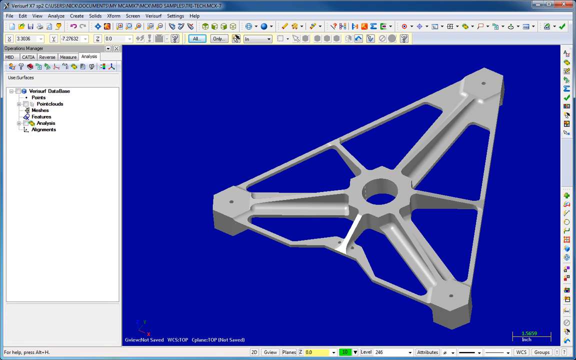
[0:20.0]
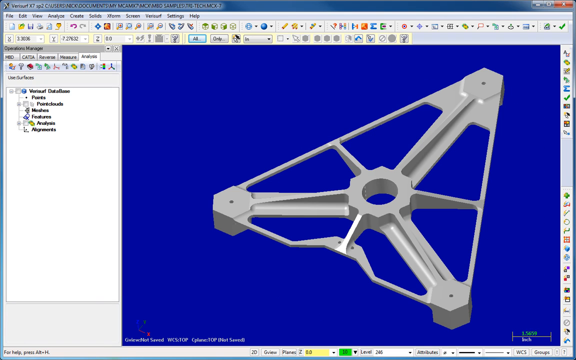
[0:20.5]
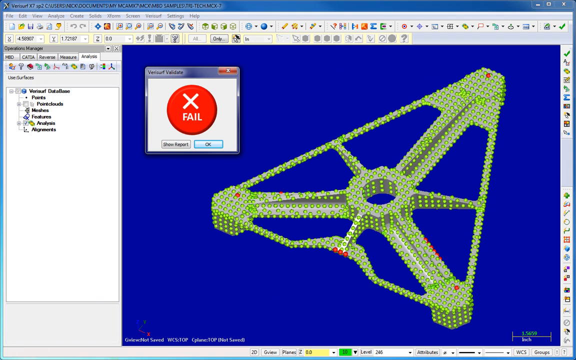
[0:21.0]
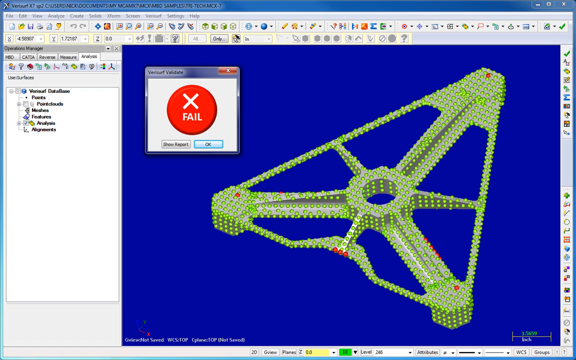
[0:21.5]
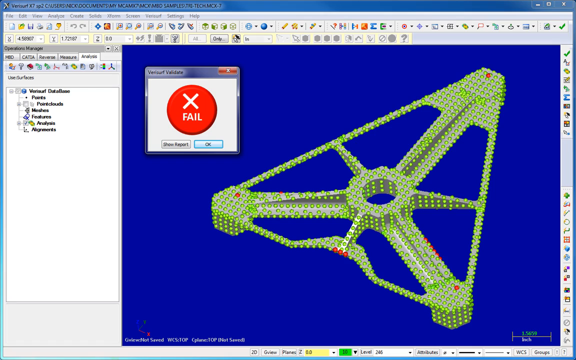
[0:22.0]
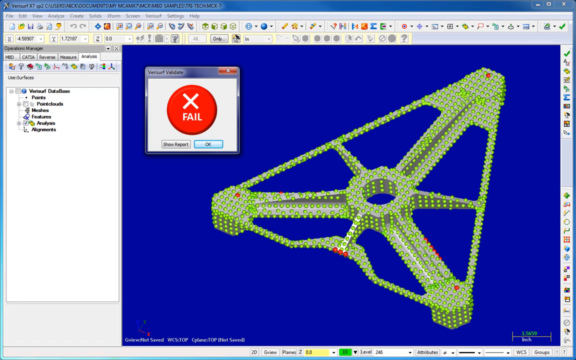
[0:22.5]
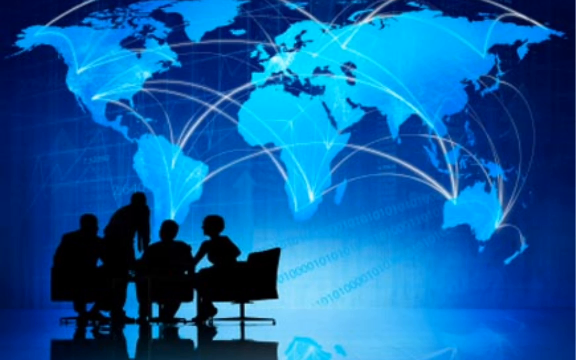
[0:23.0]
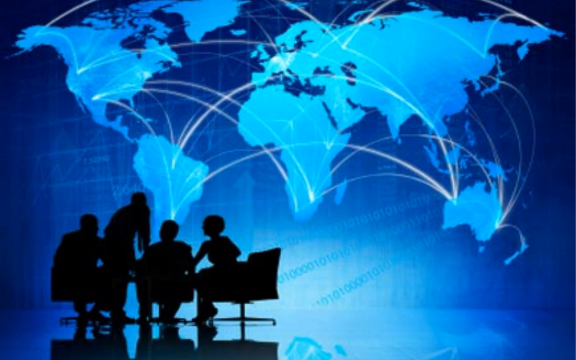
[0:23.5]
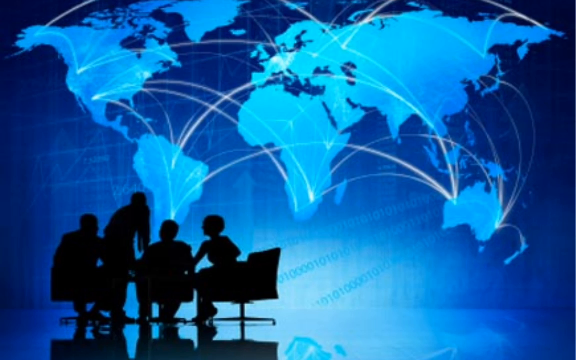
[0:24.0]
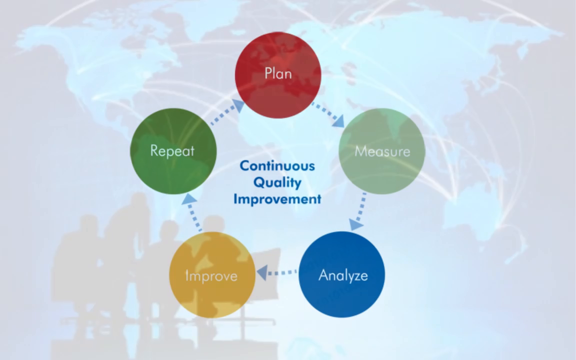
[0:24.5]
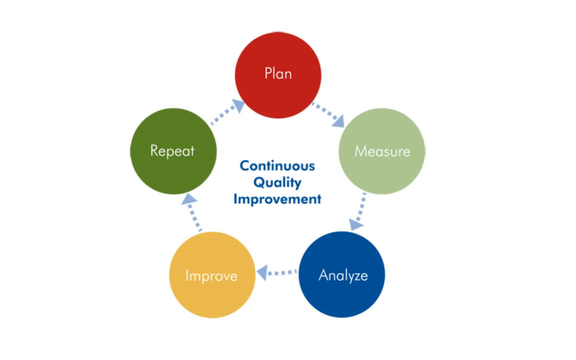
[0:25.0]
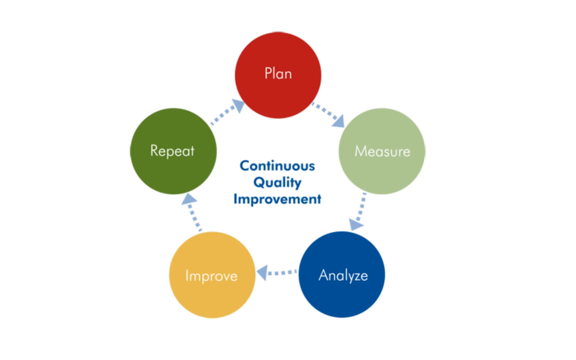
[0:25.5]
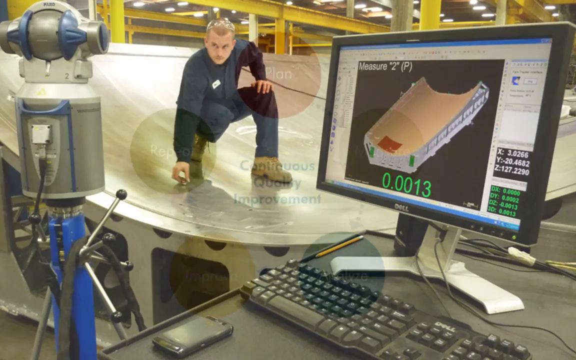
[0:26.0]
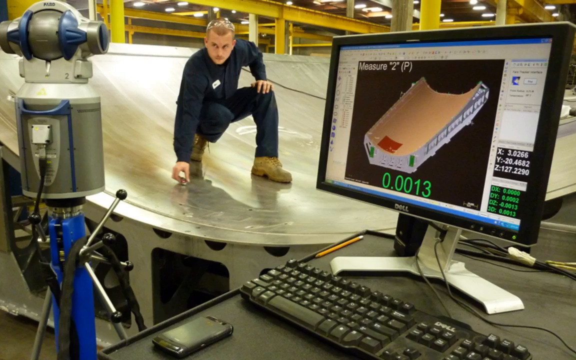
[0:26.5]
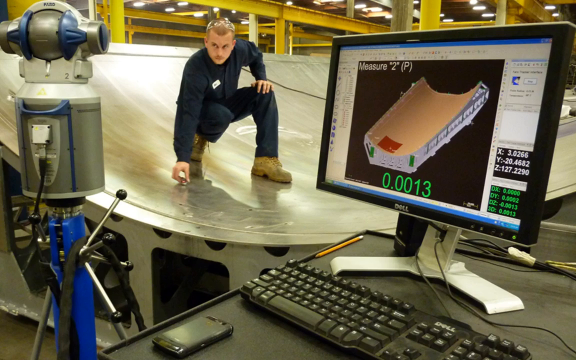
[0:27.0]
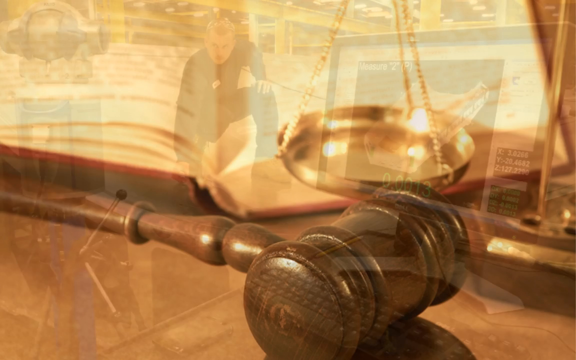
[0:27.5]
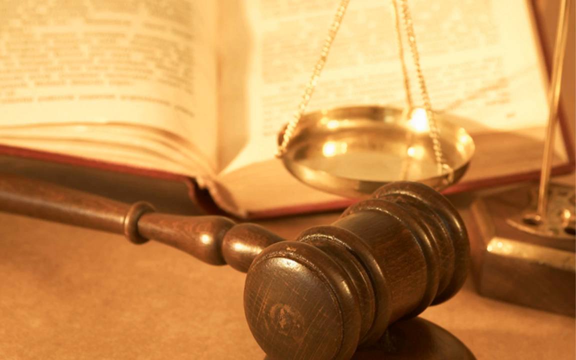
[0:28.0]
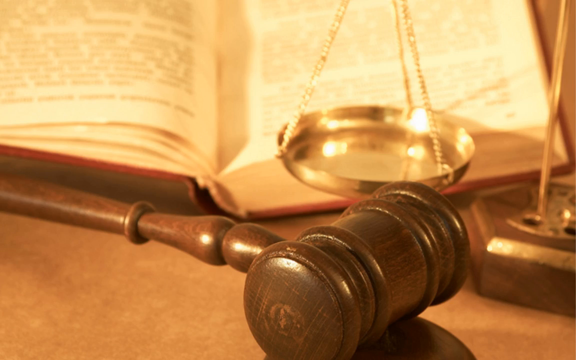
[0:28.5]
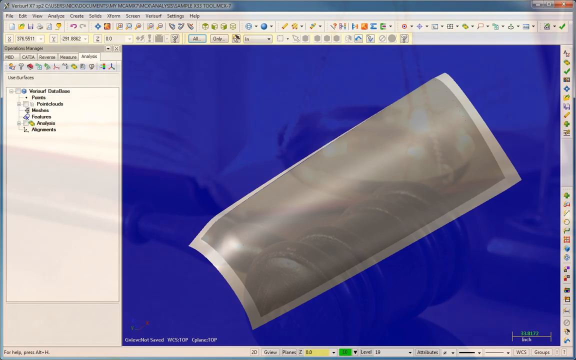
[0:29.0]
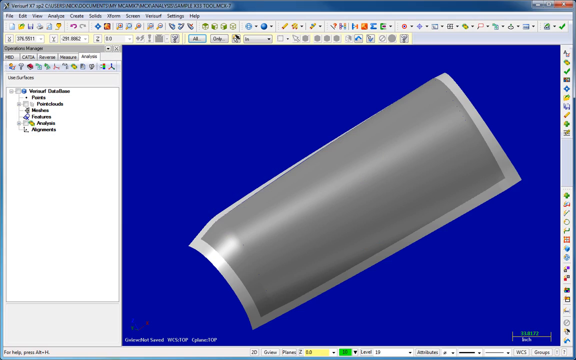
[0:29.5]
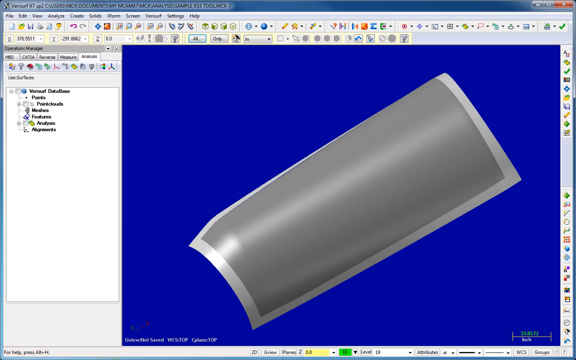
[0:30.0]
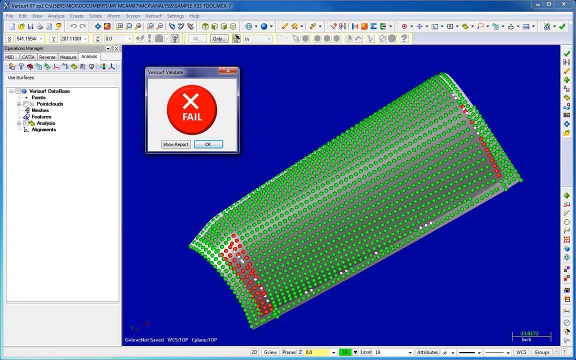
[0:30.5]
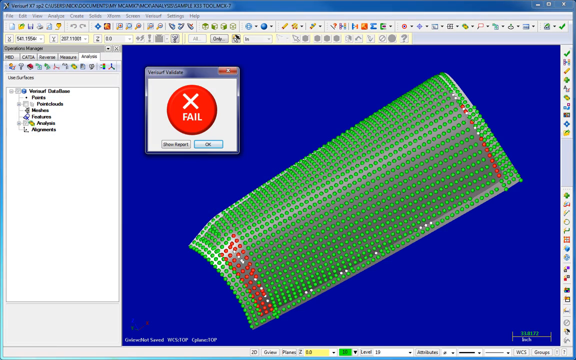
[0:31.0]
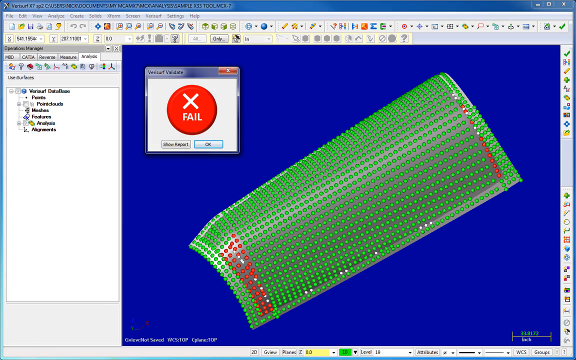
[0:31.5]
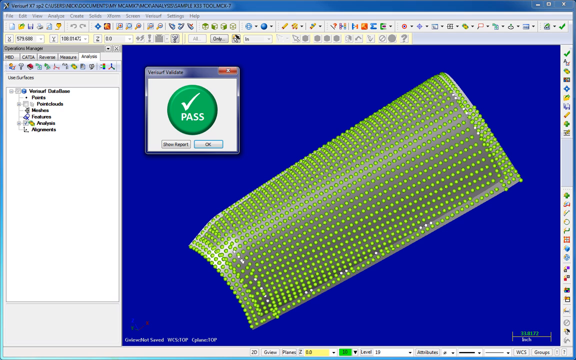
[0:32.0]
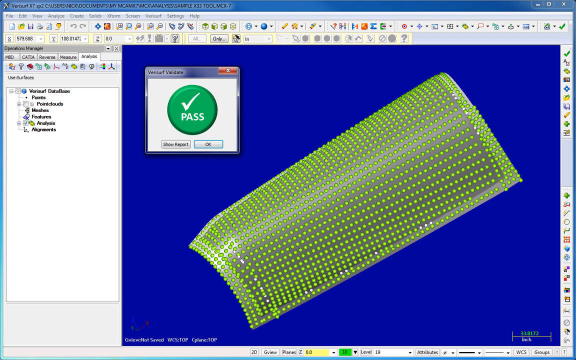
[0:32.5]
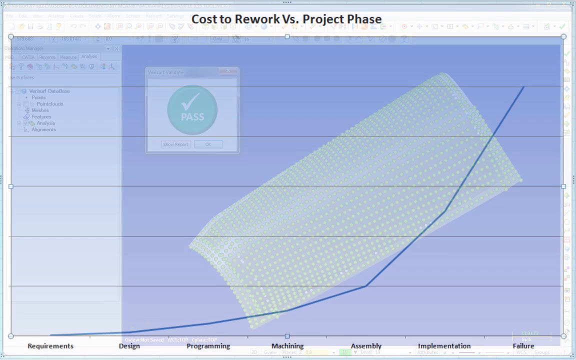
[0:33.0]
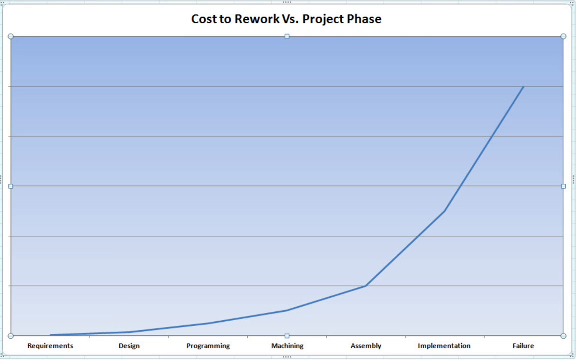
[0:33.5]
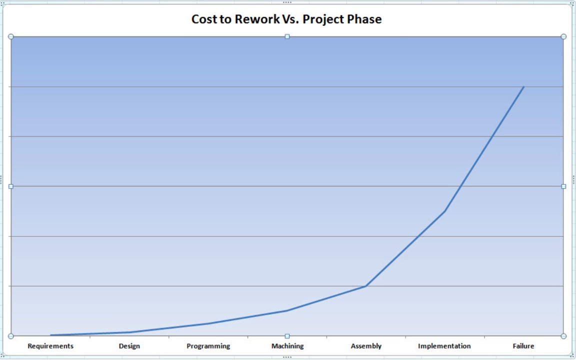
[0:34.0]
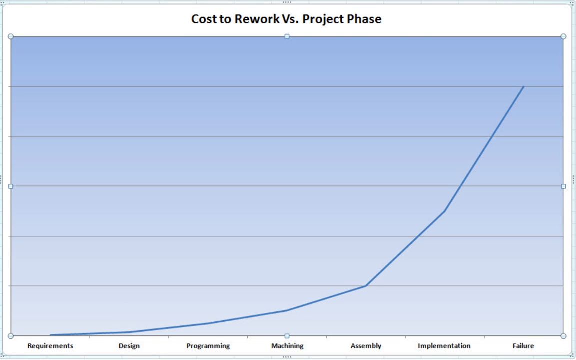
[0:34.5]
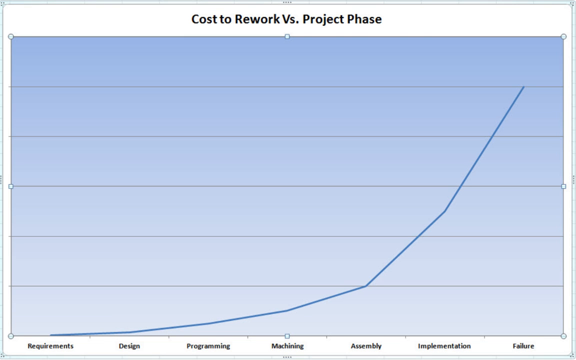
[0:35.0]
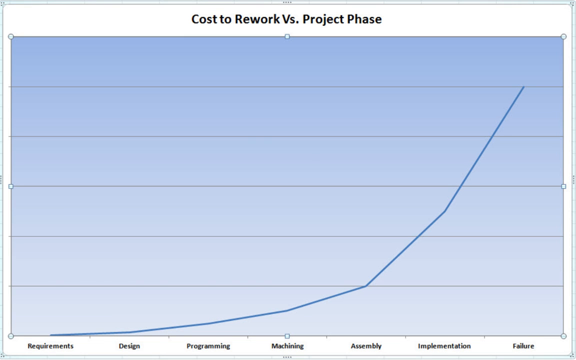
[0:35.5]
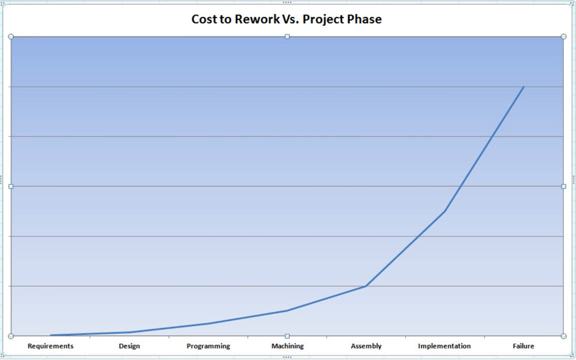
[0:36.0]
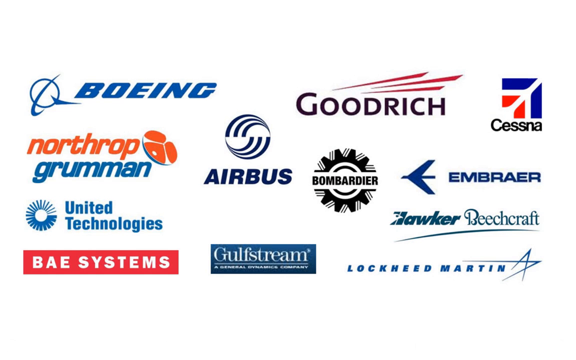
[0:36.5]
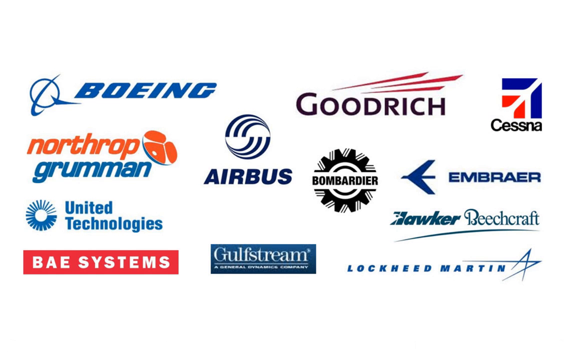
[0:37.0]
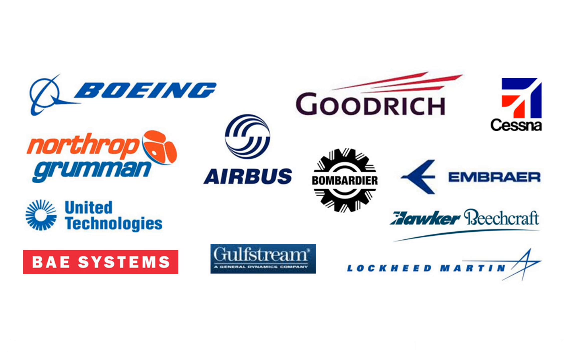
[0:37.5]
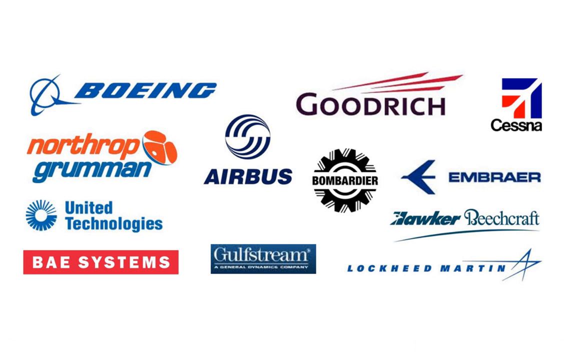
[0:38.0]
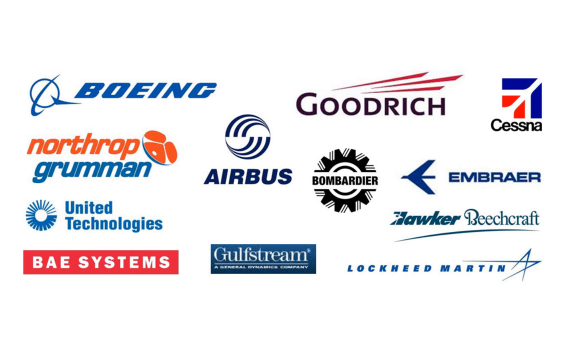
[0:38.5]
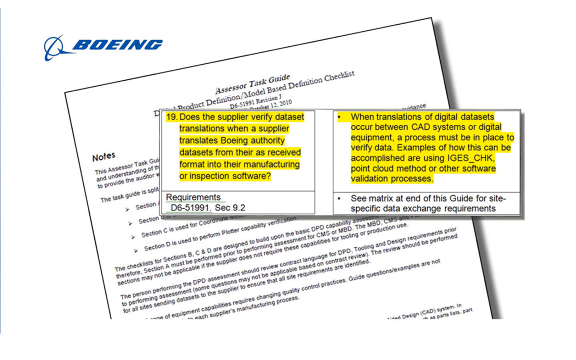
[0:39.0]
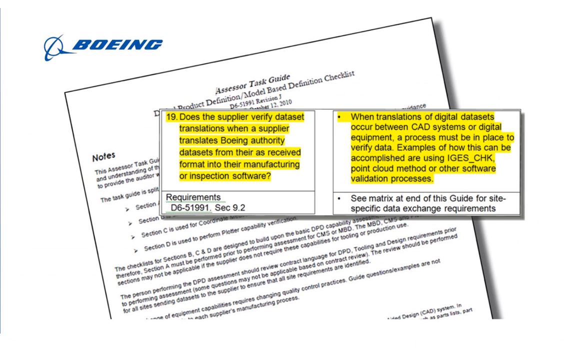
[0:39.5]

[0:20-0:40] The design software is shown with the process in which failures to meet the specs are presented. The software is shown being used for very large parts, such as a boat hull or an aircraft part. The video indicates that the costs of part failures, in retooling and reworking designs, can be catastrophic. Many manufacturers, most of them in the aircraft business, appear to be touted as users of the software; among the companies shown are Airbus, apparently Northrop, and possibly Cessna, along with several others.